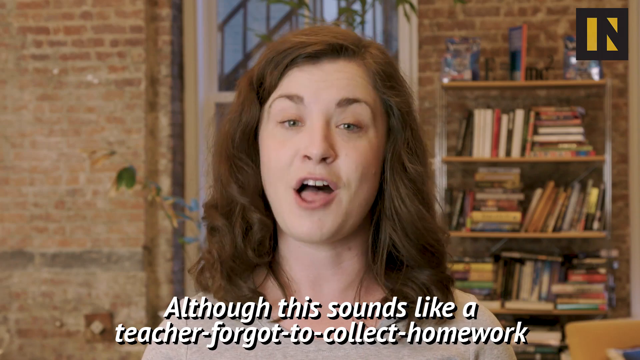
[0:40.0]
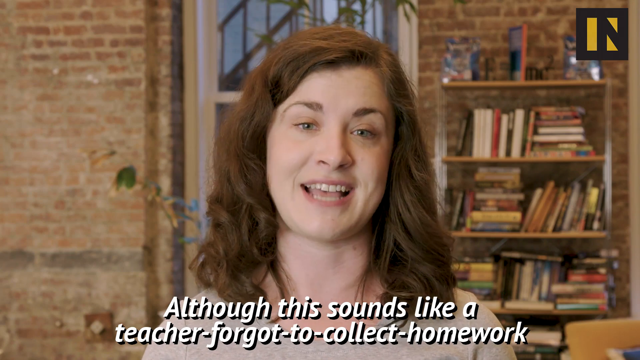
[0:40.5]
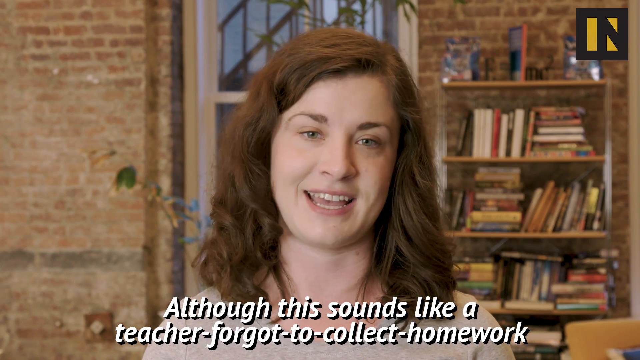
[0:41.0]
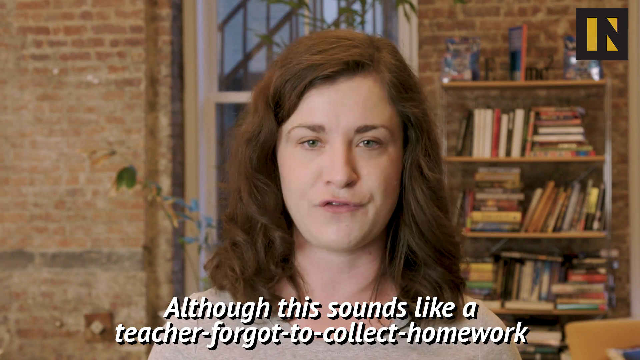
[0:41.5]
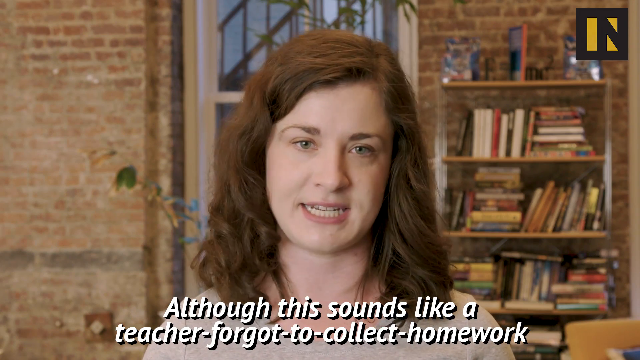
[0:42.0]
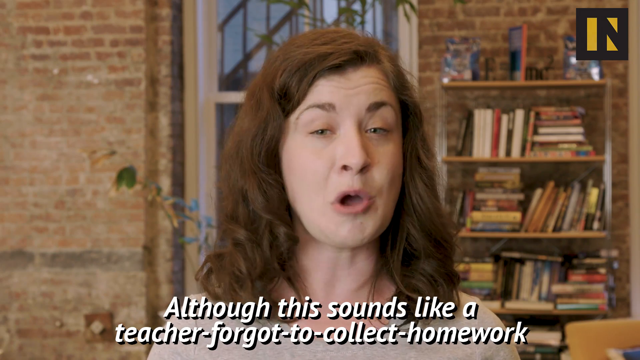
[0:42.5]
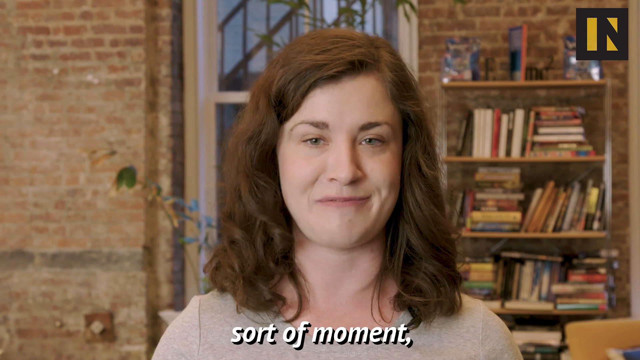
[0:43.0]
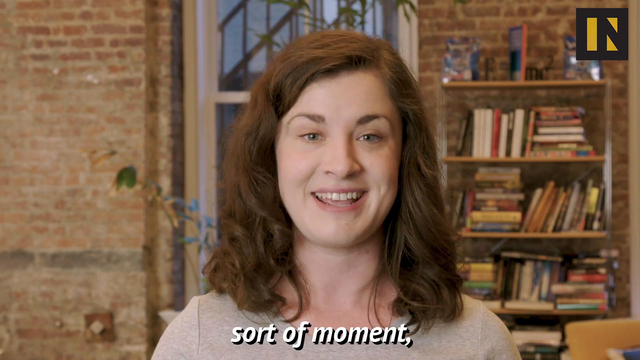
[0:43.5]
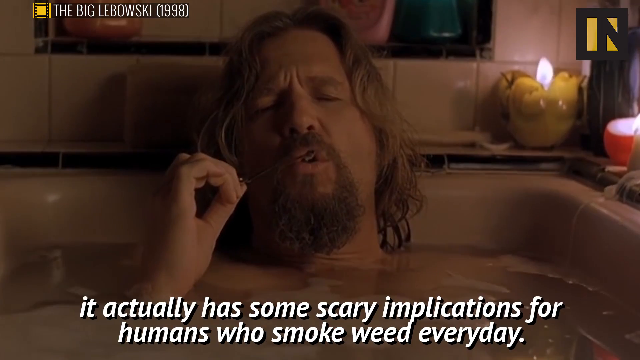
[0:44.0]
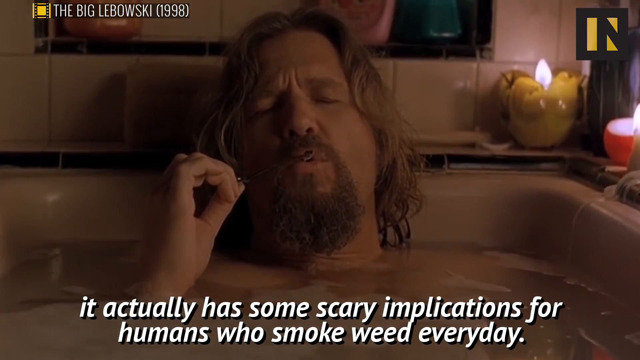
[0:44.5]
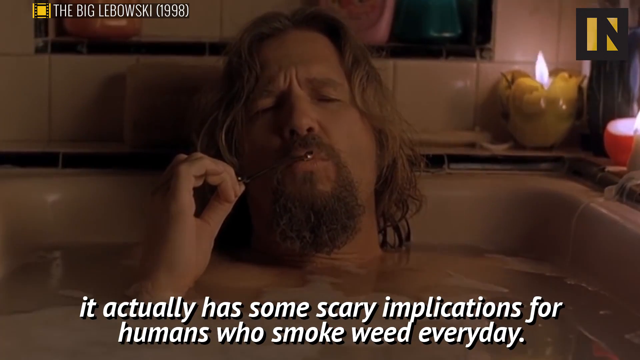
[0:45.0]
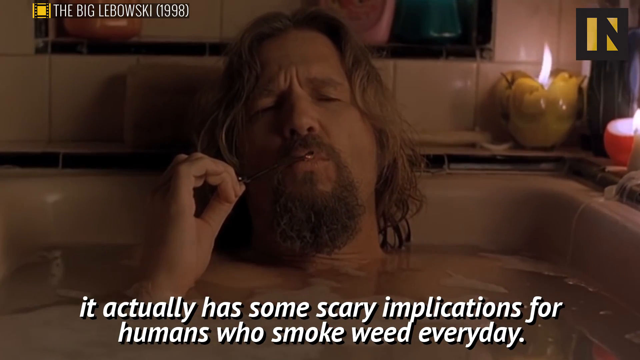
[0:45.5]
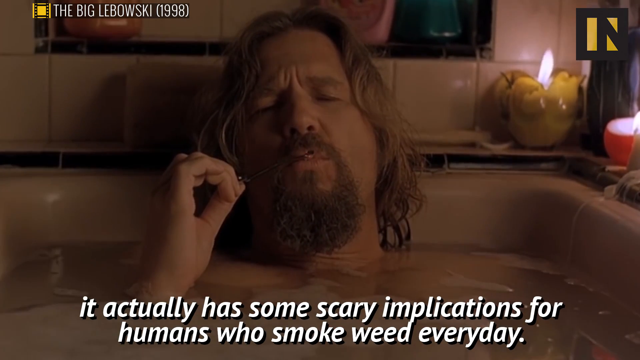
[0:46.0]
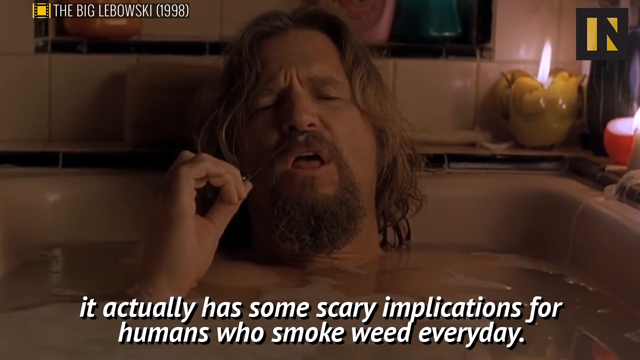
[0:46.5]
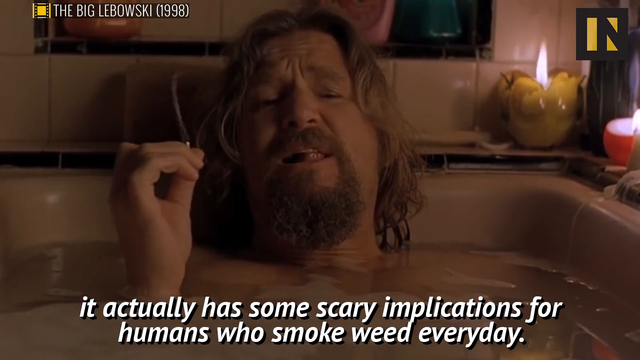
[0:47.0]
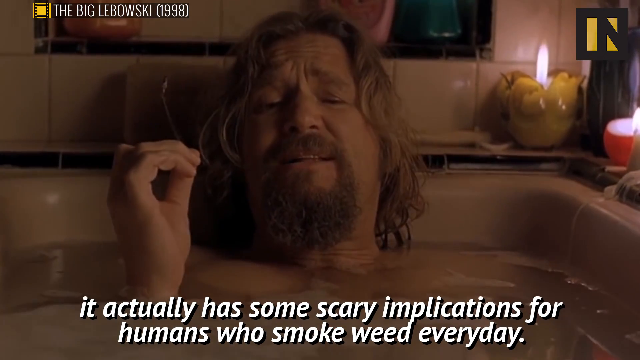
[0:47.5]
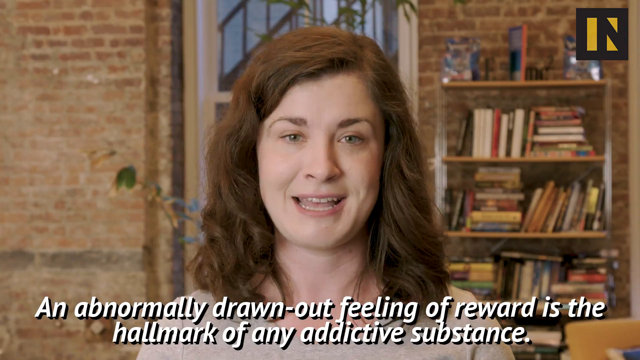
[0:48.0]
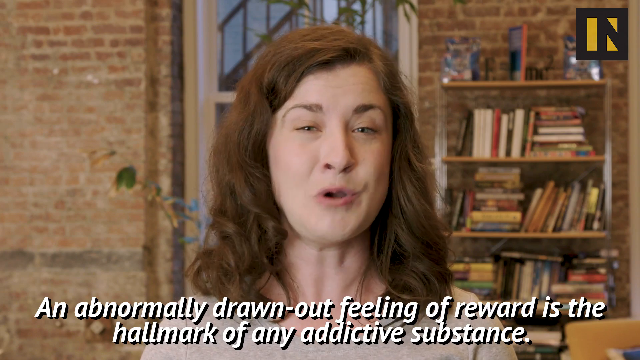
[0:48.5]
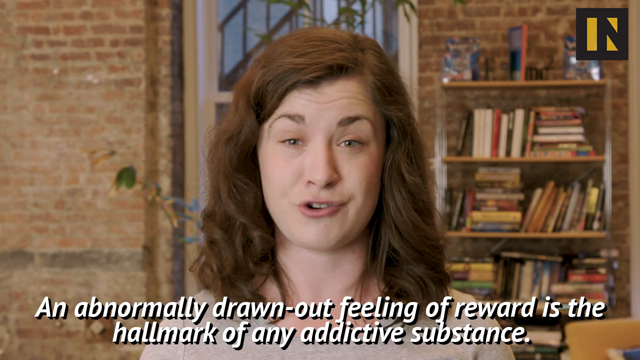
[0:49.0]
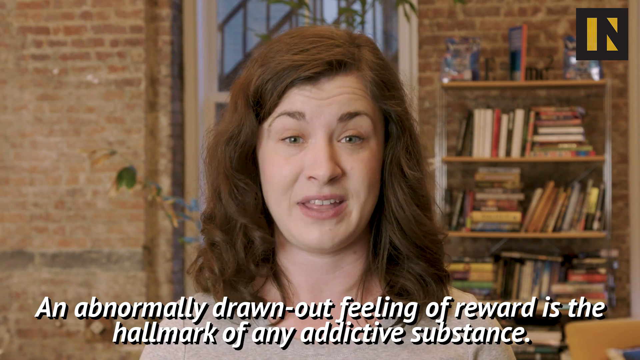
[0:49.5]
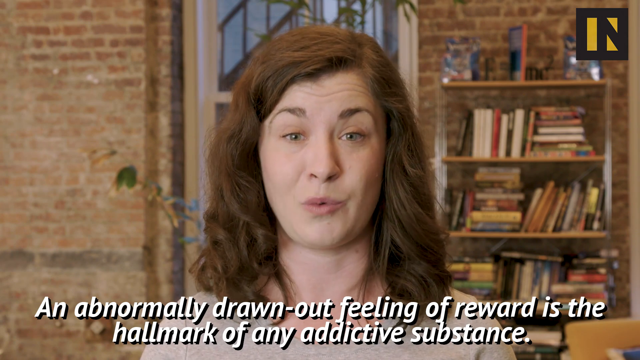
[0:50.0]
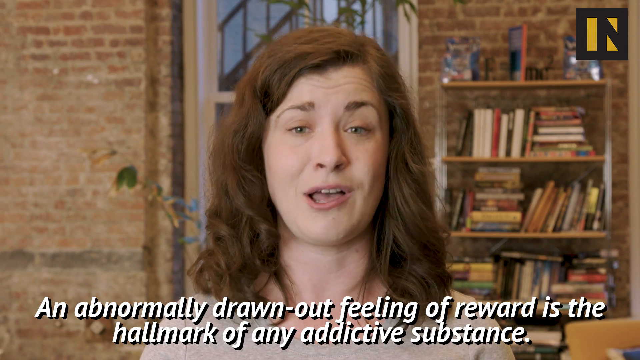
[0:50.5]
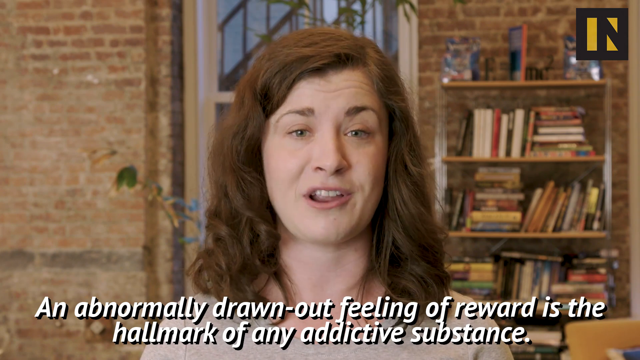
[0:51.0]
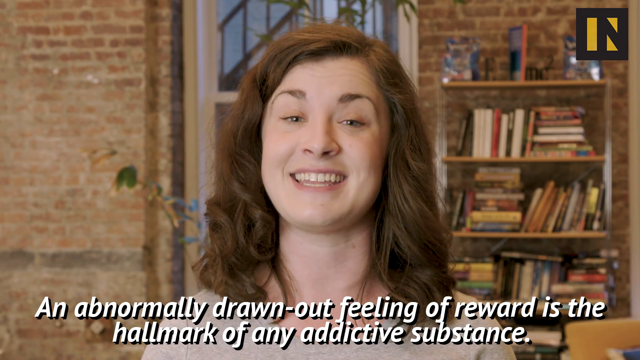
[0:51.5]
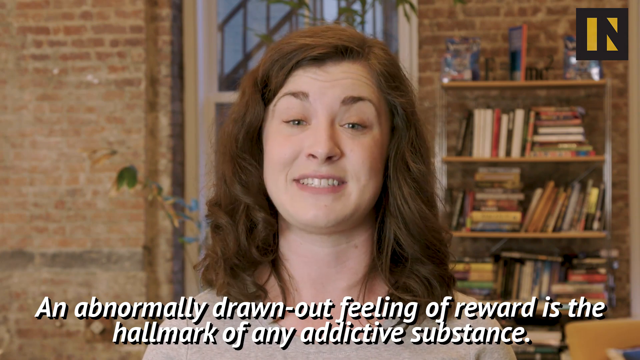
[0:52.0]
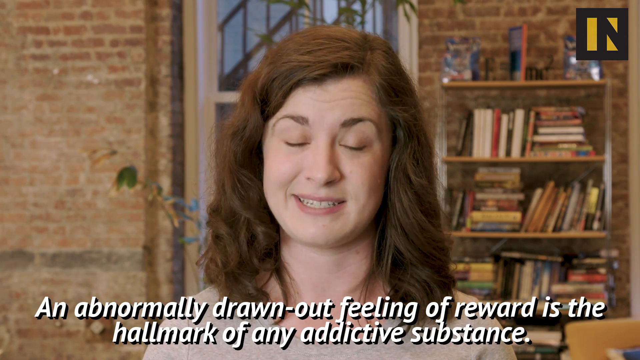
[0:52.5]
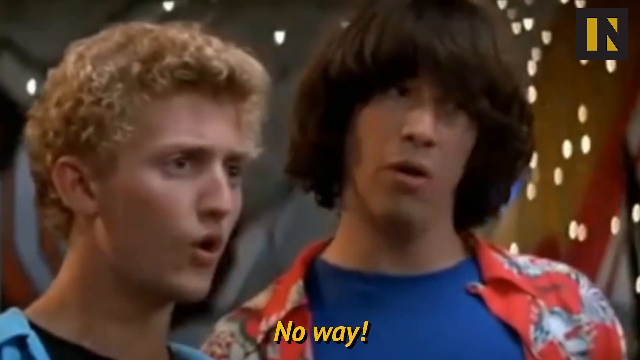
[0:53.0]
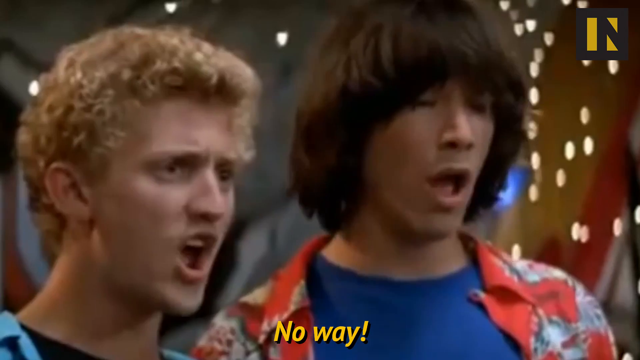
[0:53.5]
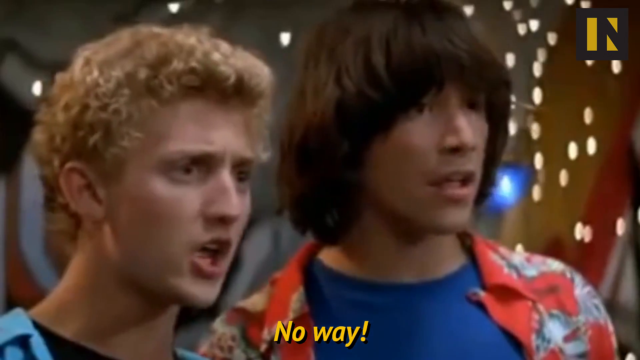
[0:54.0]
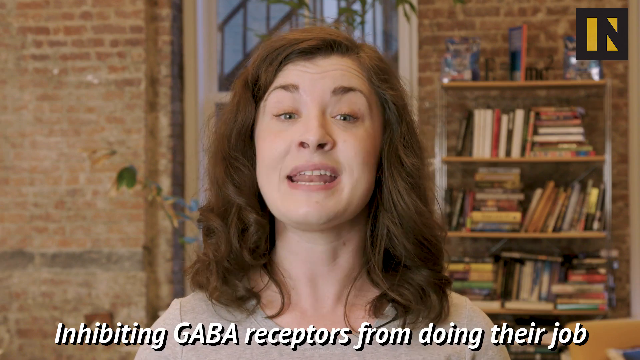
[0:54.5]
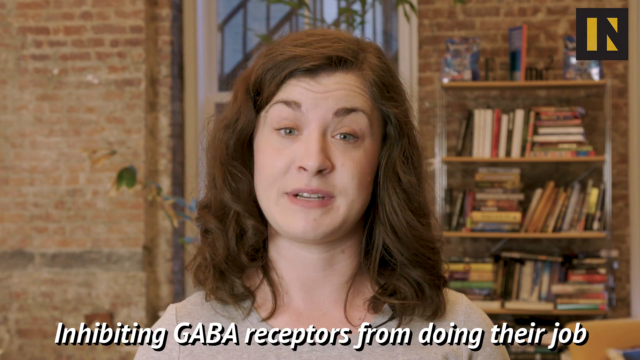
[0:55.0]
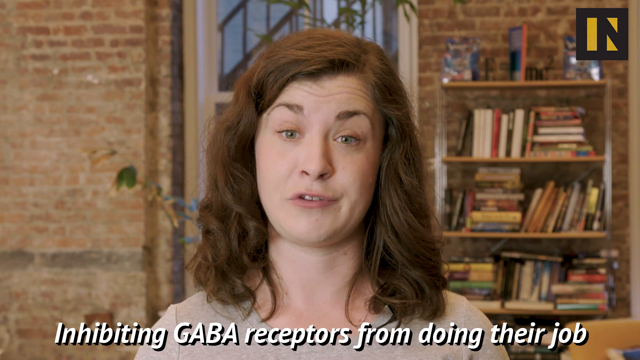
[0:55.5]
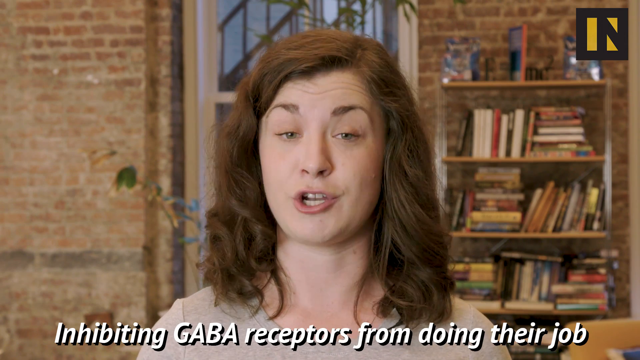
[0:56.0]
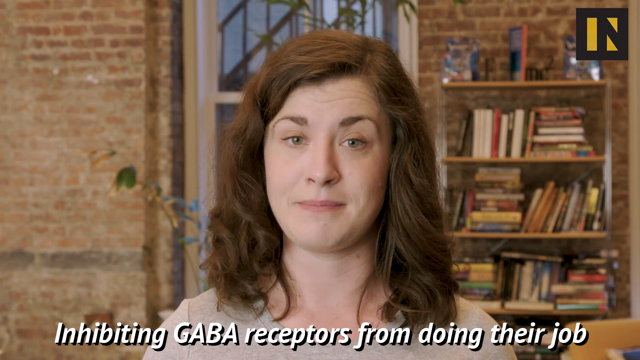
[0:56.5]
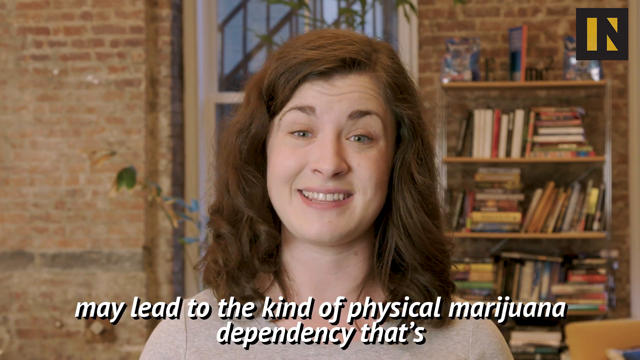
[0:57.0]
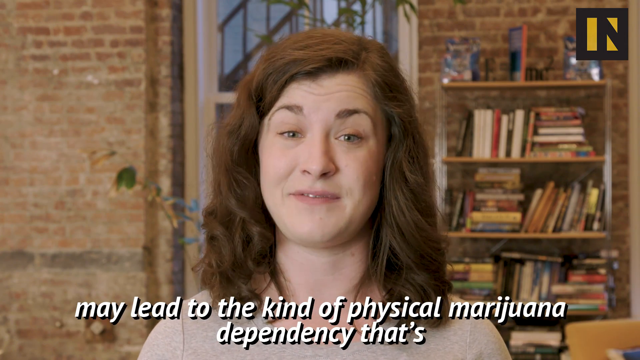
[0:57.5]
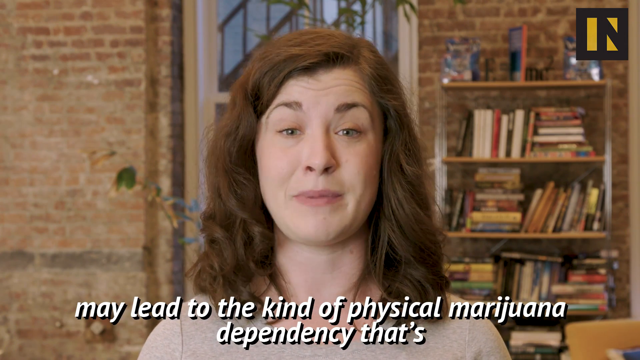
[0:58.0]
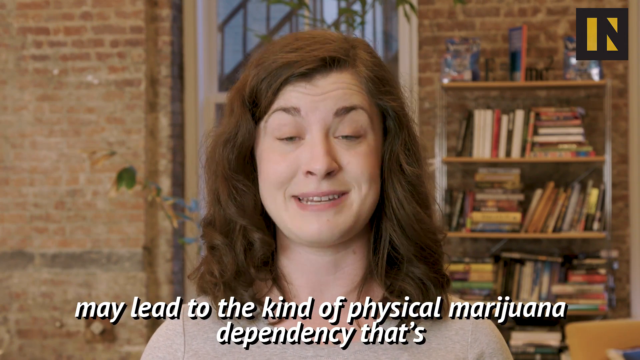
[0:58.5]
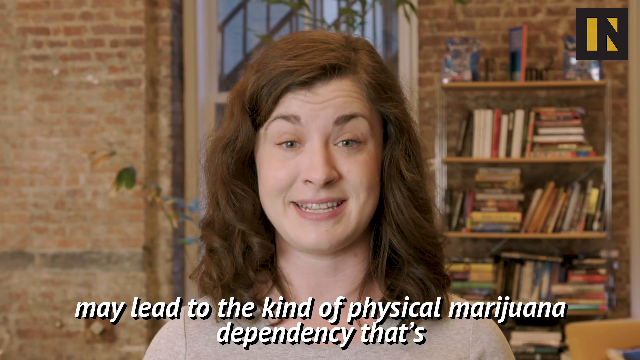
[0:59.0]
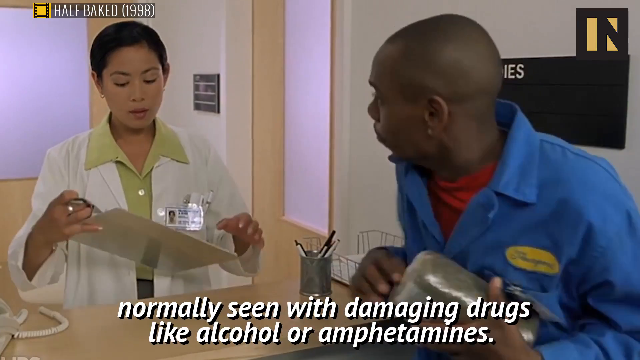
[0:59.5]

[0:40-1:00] The host, fresh-faced with shoulder-length brown hair parted on her left side, appears with a bookcase and brick walls behind her. Subtitles read "although this sounds like a teacher forgot to collect homework sort of moment, it actually has some scary implications for humans who smoke weed every day." A scene from The Big Lebowski shows the Dude smoking a joint while sitting in a bathtub, with subtitles reading "an abnormally drawn-out feeling of reward is the hallmark of any addictive substance." The host speaks directly at the camera. A scene from Bill and Ted follows, in which Bill and Ted are saying "no way." Subtitles read "inhibiting GARA receptors from doing their jobs may lead to the kind of physical marijuana dependency." The video switches to a scene from Half-Baked in which Dave Chappelle looks like he has found where all the marijuana is hidden in the hospital; text in the top corner reads "Half-Baked, 1998." The doctor is in a full doctor outfit and Dave Chappelle is in a janitor's outfit. The subtitles say "normally seen with damaging drugs like alcohol and amphetamines."